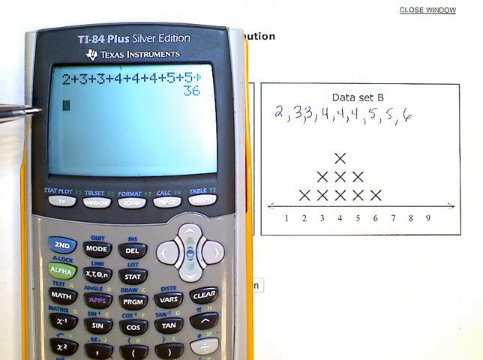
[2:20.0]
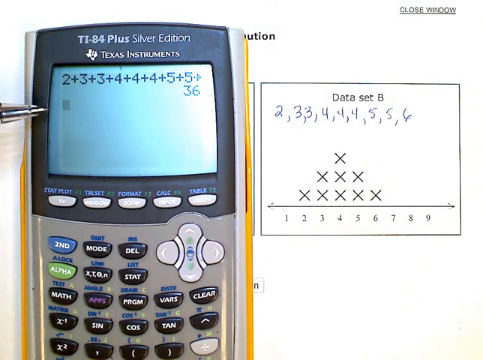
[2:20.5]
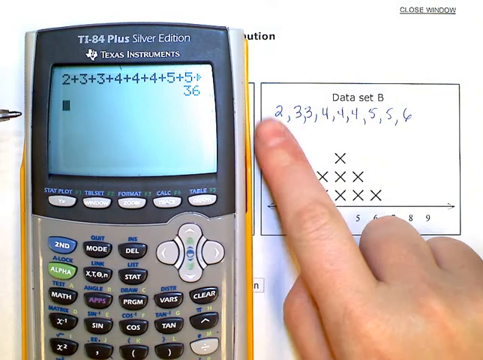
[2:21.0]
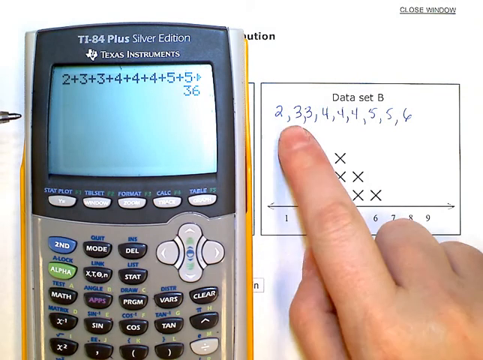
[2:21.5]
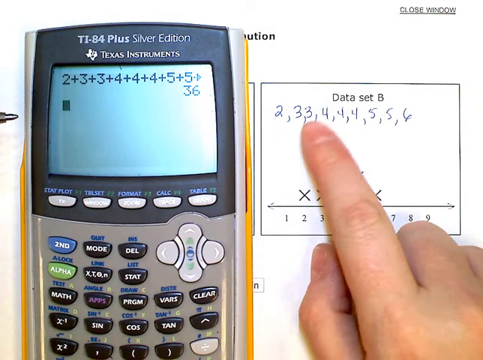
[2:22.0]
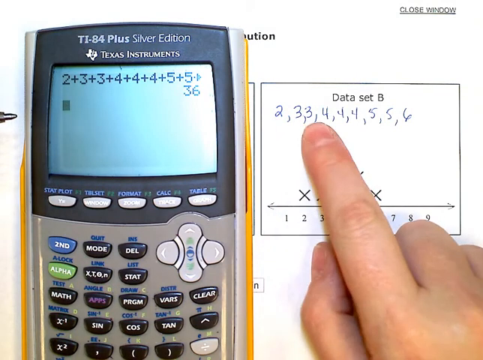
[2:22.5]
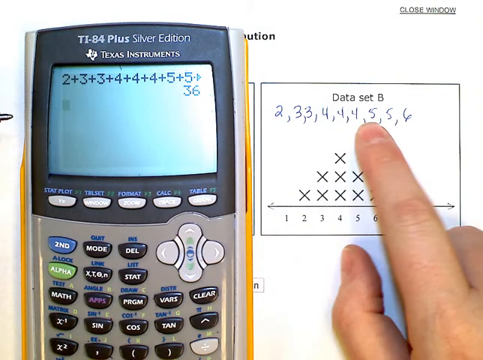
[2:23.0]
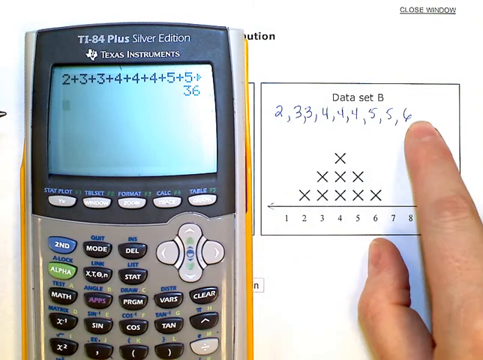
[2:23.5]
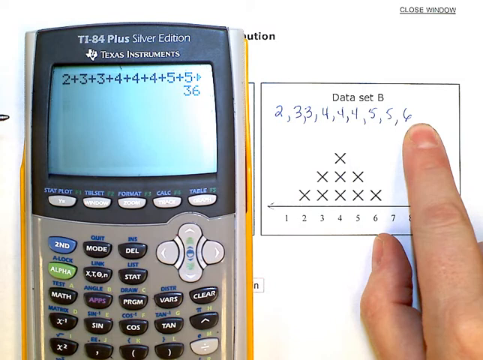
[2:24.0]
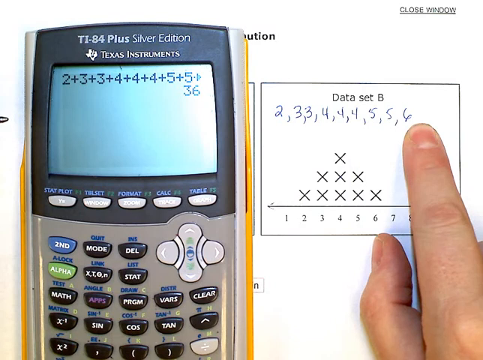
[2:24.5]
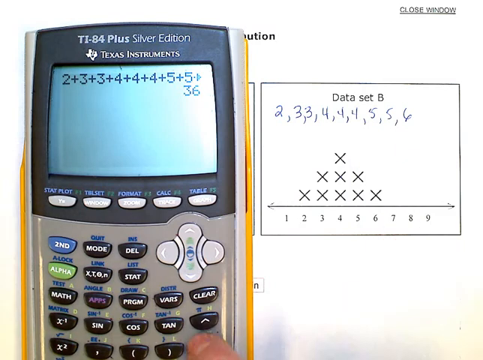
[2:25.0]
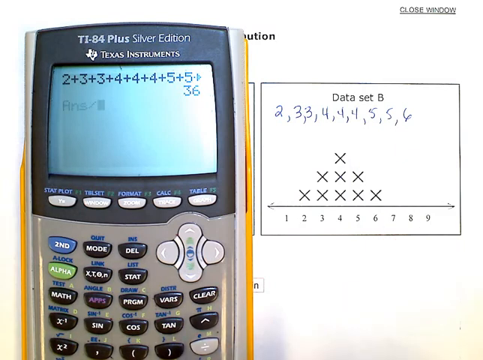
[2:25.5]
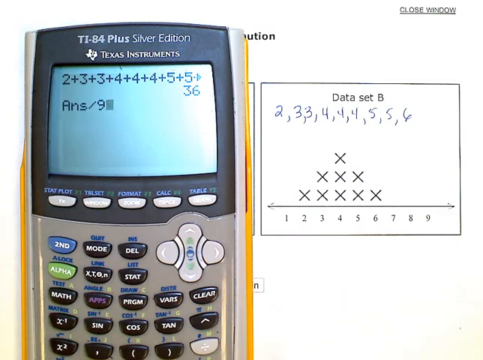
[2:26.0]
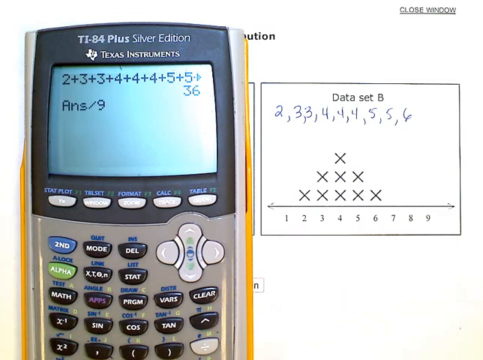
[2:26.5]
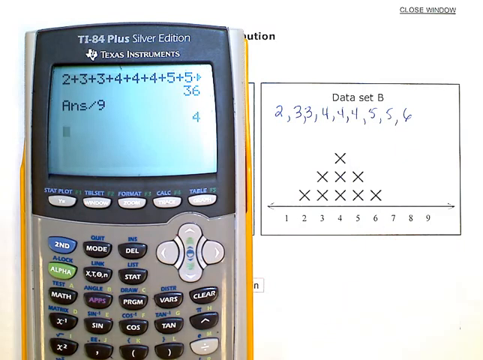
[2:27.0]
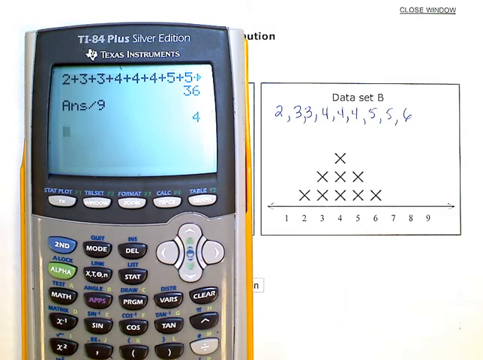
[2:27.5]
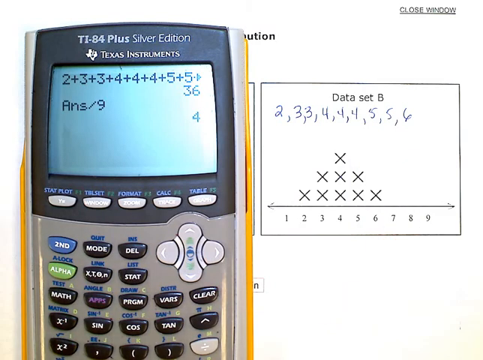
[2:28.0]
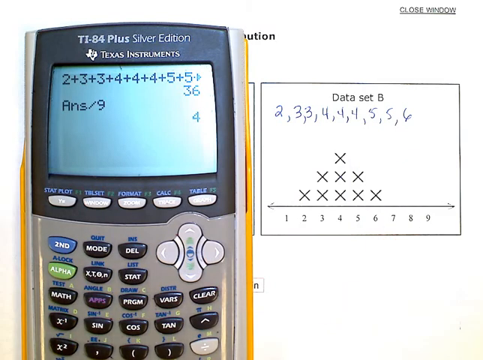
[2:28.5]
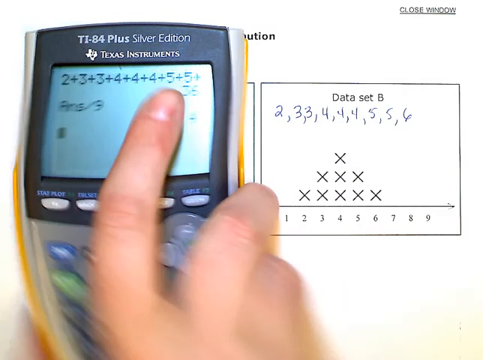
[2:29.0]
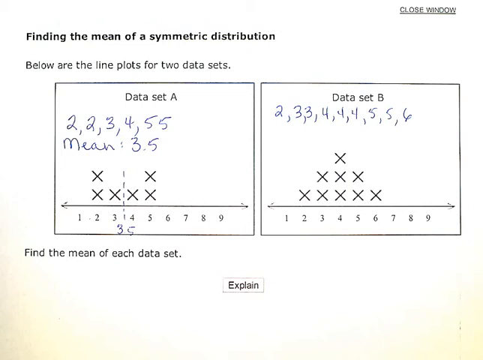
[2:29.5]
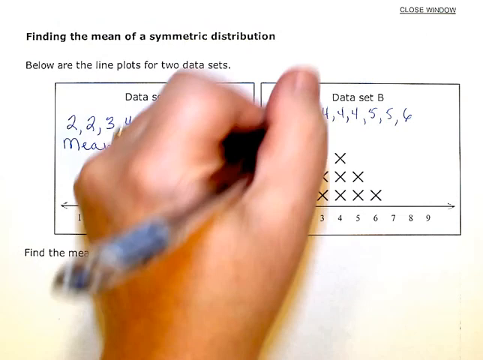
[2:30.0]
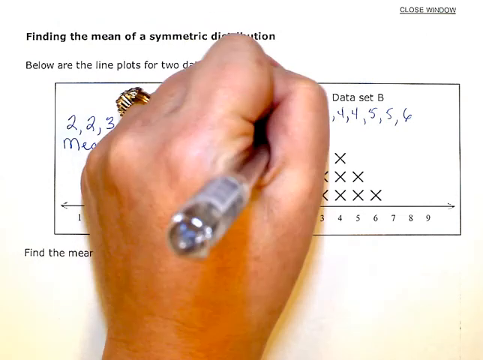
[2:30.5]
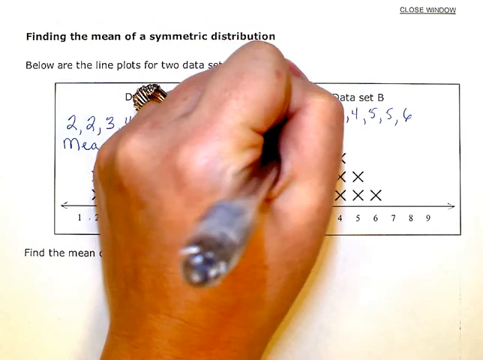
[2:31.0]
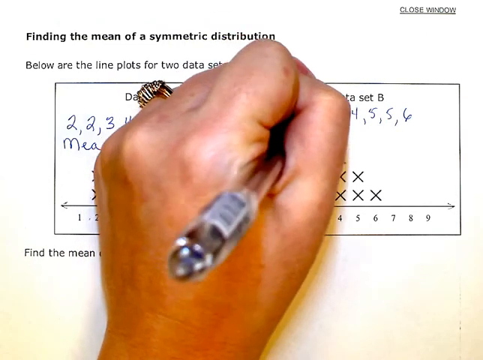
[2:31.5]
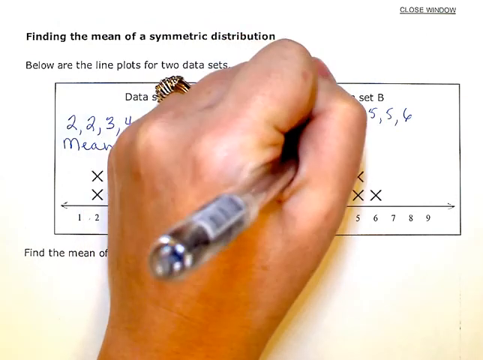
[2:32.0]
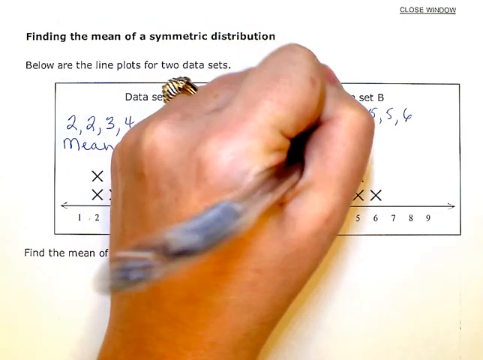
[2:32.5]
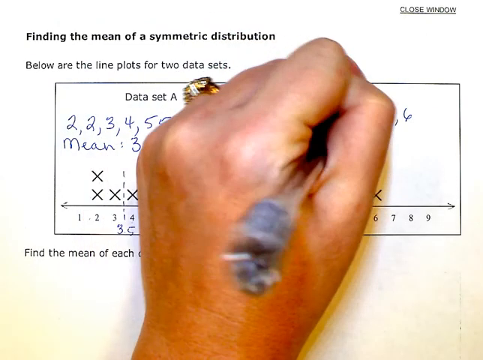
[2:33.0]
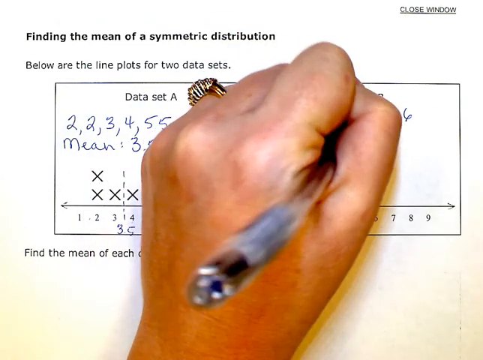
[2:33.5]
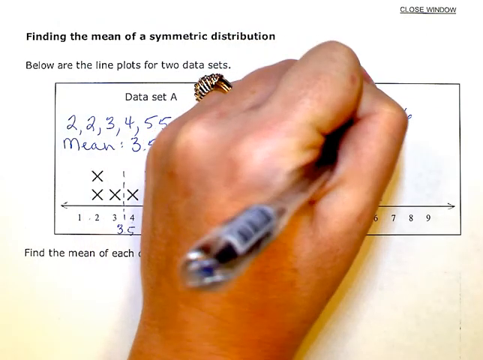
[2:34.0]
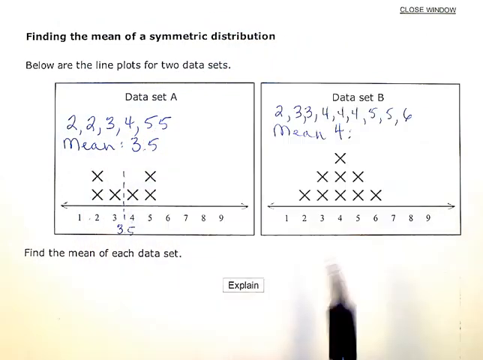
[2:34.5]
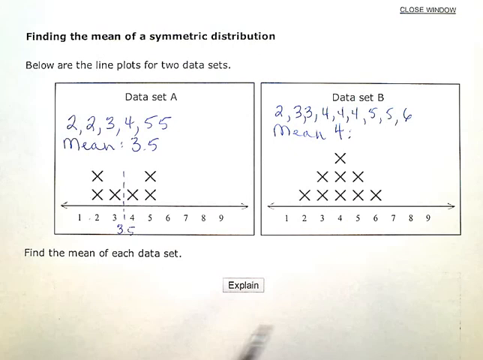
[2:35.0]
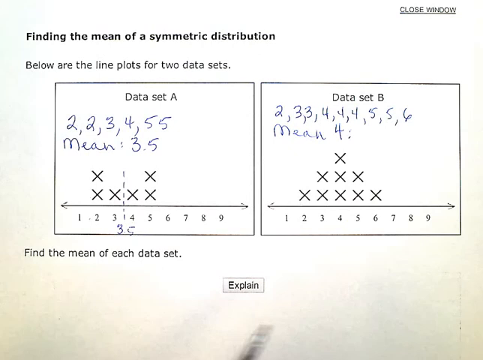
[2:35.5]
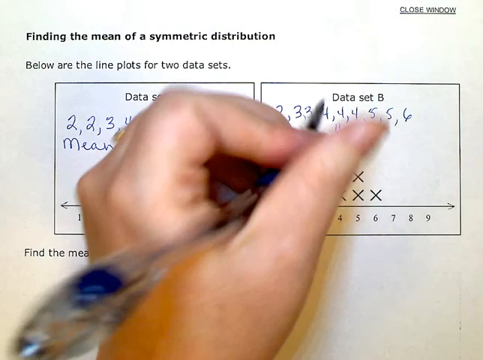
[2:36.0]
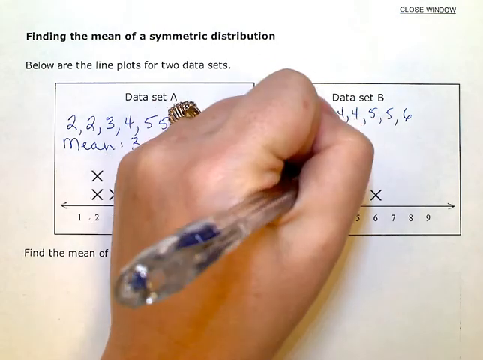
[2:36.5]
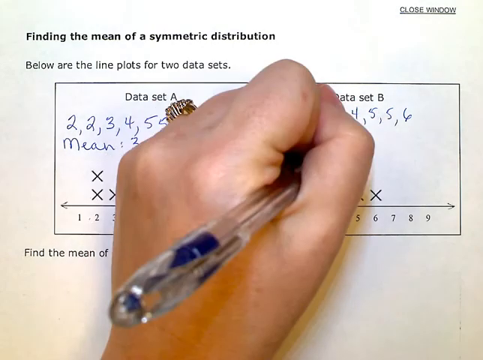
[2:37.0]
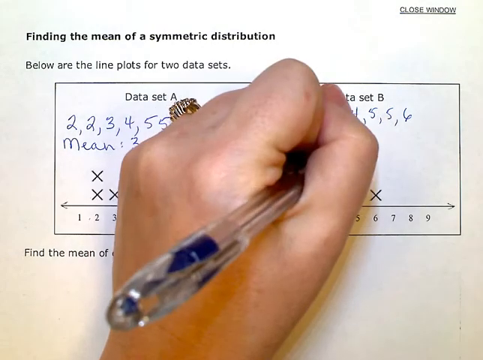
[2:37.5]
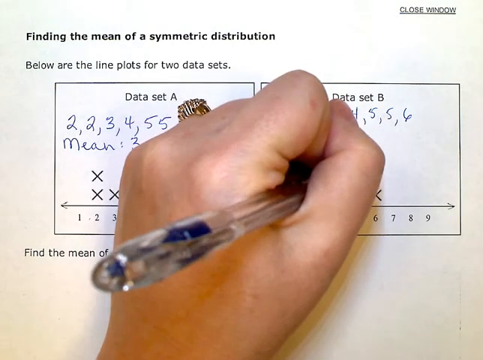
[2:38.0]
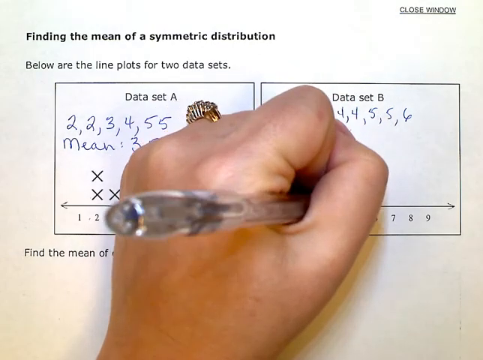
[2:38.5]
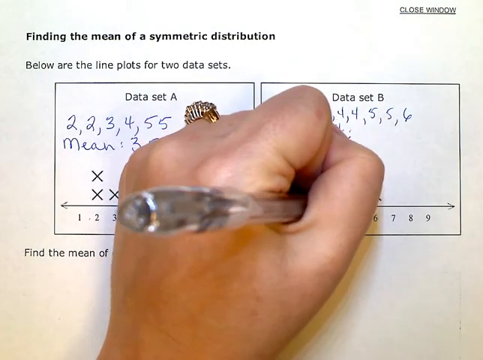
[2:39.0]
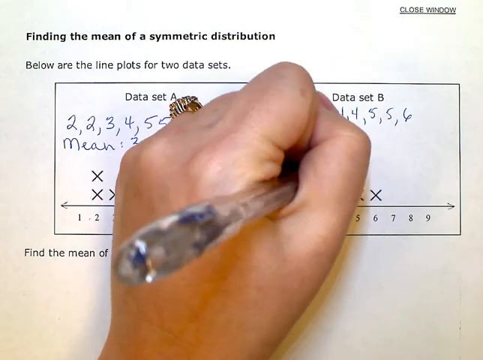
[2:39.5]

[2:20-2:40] She briefly uses the pen to indicate the result on the calculator, then points with her right index finger to each number from left to right, 2, 3, 3, all the way through 6, holding her finger there for a moment. She then enters "answer/9", which gives 4, and pulls the calculator away.